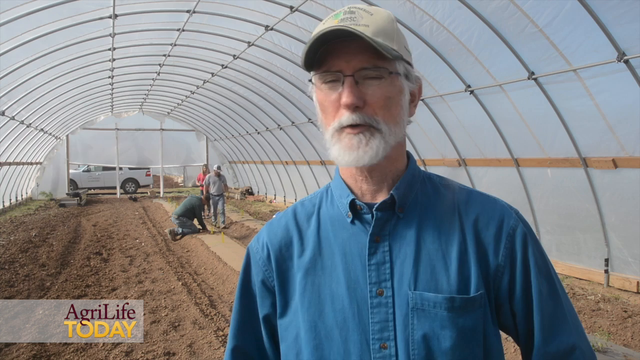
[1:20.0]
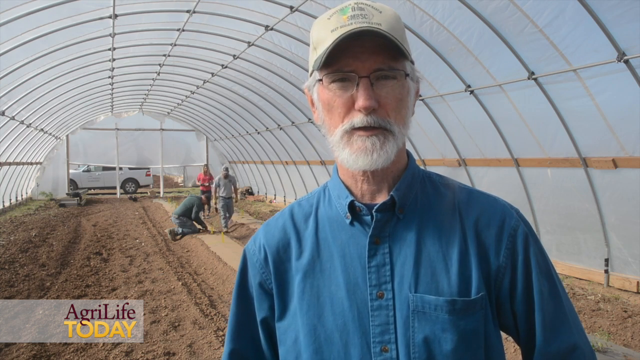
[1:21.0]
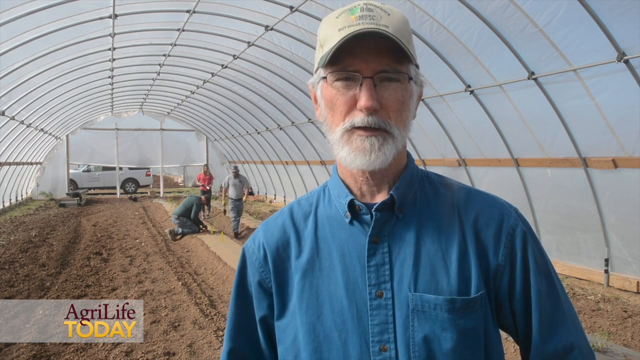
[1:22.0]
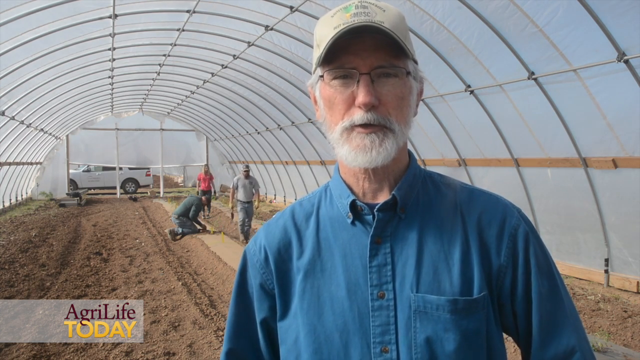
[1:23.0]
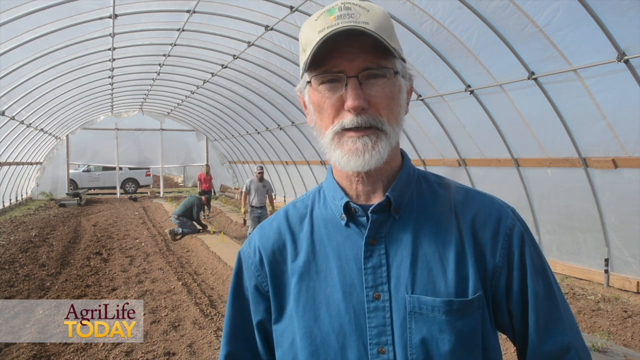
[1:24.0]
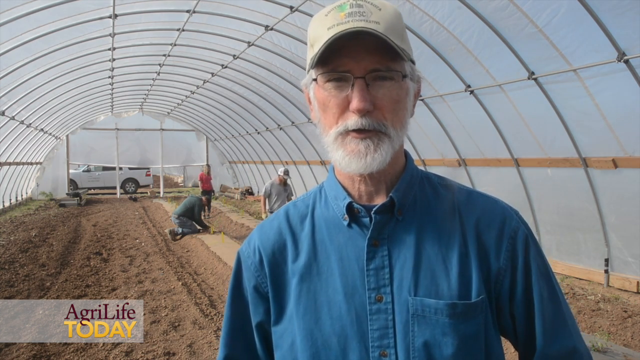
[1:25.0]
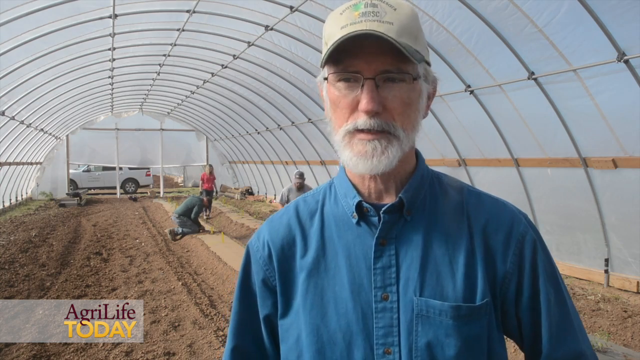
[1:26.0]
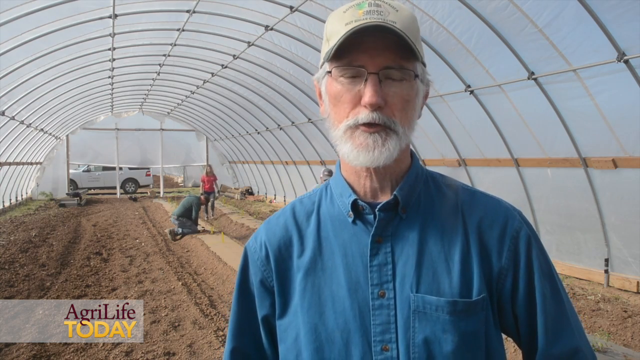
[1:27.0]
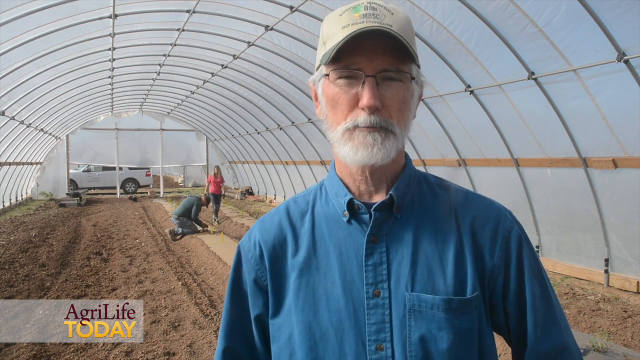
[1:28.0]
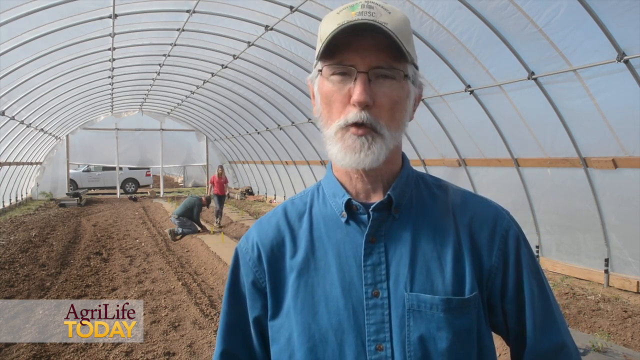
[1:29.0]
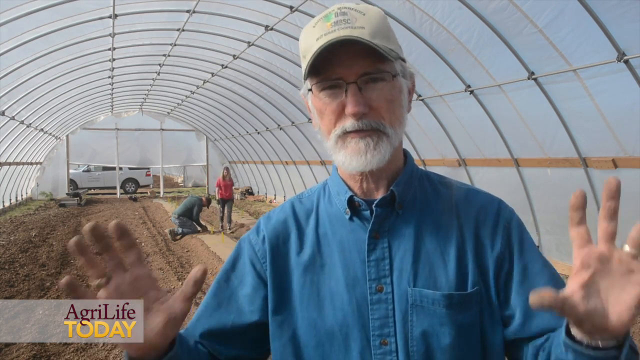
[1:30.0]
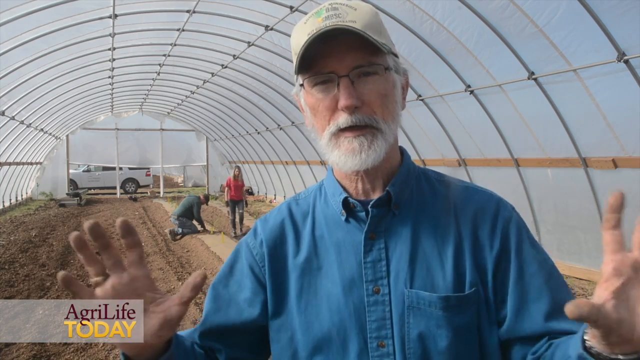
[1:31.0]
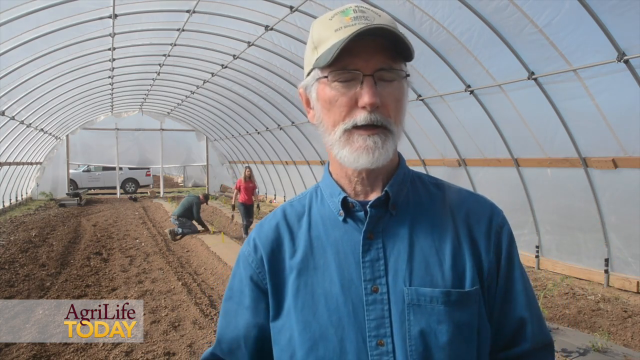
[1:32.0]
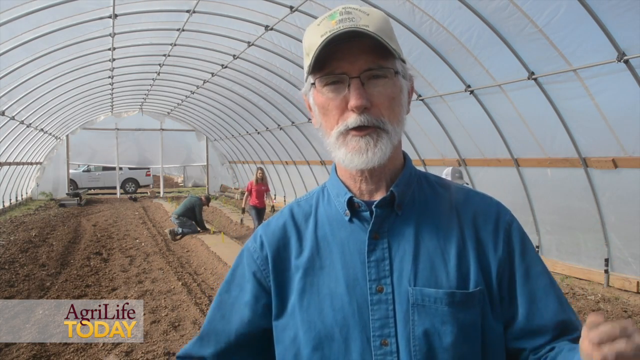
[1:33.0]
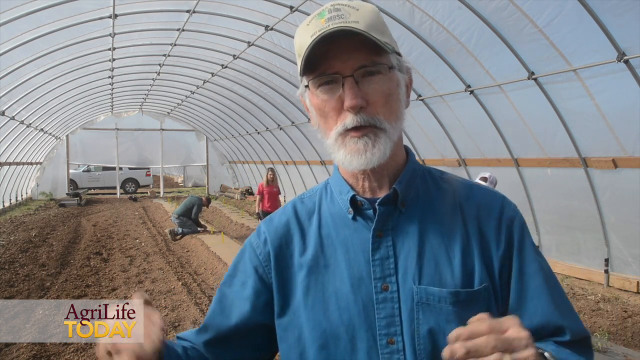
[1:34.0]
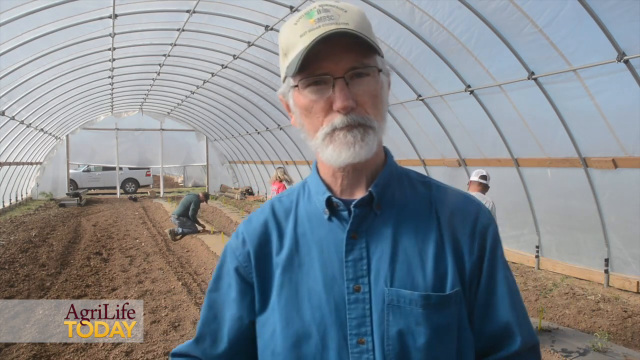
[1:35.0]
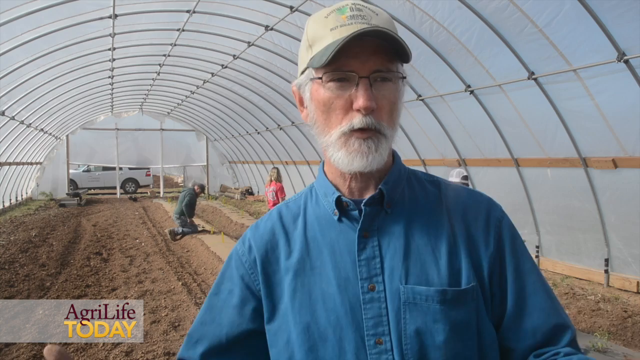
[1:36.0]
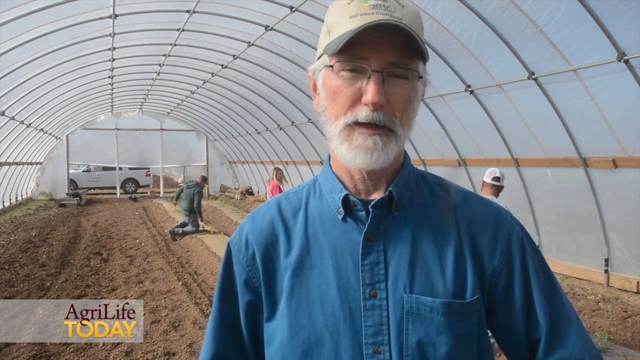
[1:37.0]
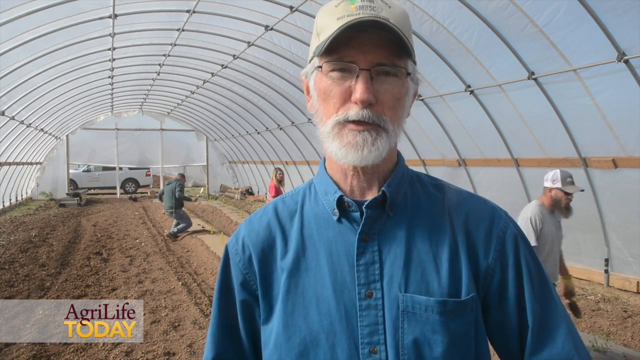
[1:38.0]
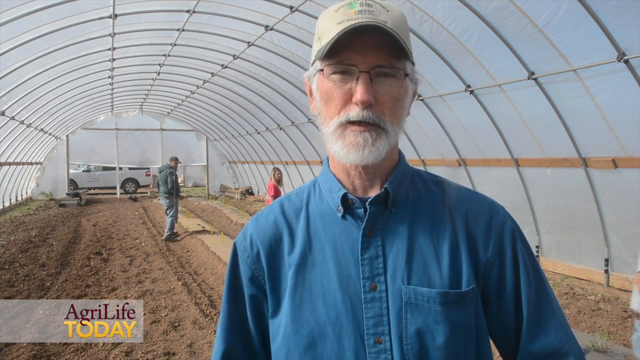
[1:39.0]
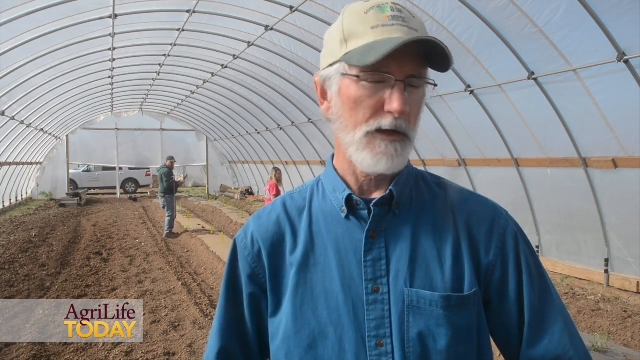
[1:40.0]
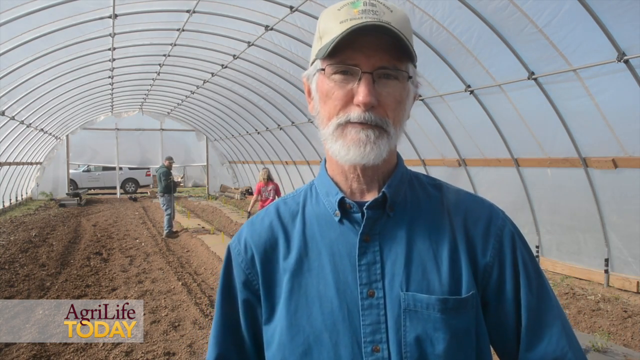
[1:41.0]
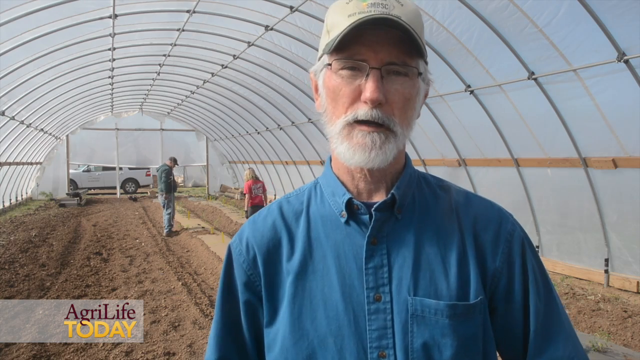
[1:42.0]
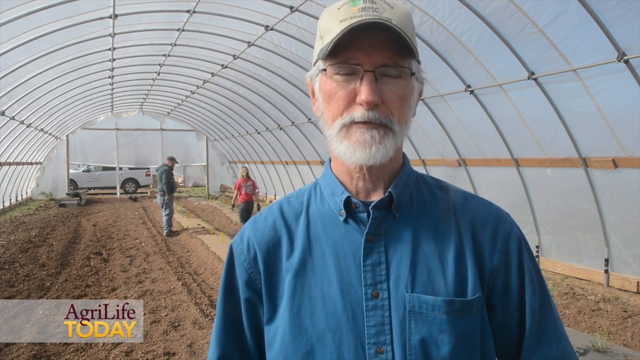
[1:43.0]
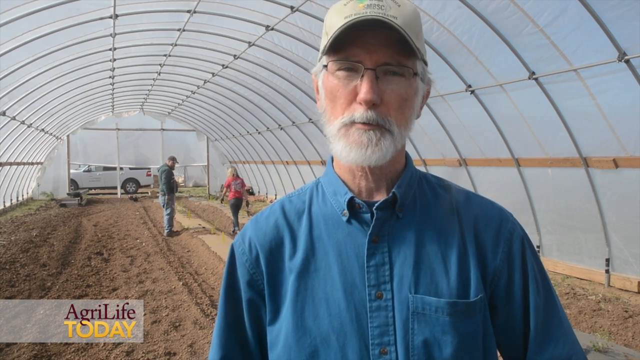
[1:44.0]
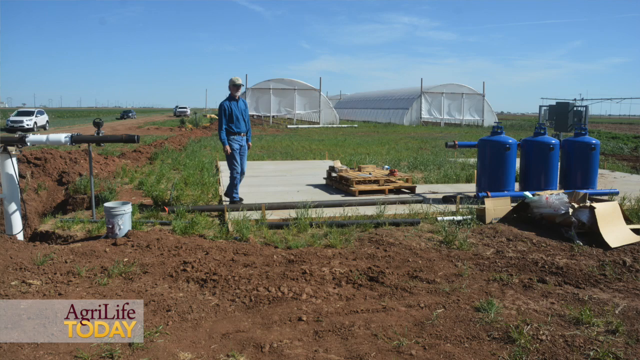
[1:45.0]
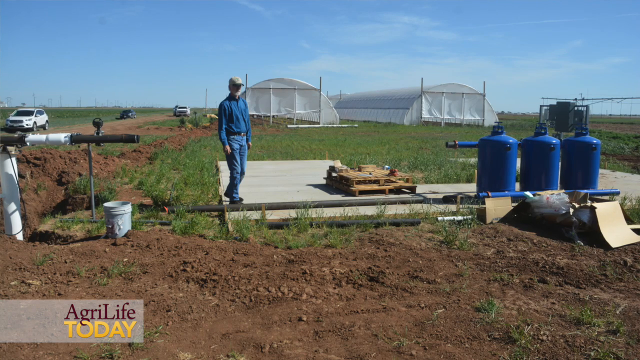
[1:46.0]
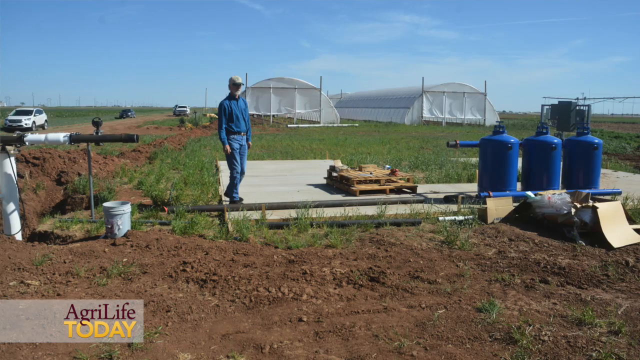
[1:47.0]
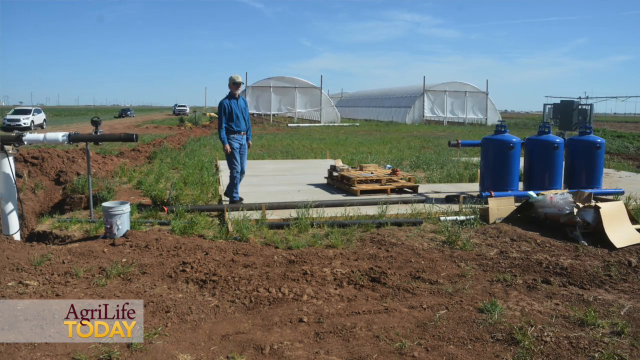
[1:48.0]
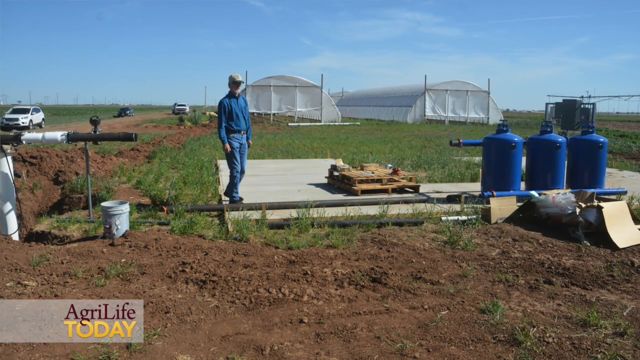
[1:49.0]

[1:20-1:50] An older man with white hair, a white beard, a baseball cap and glasses stands at the front of the image, wearing a blue shirt unbuttoned at the top. In the background, inside the greenhouse he is standing in, three men appear to be tending to the soil in some way; one is on his knees and the other two are standing up. A white four-wheel drive is also visible in the background, outside the greenhouse. The man at the front, closer to the cameraman, talks animatedly, his hands moving up and down. "AgriLife Today" comes up in the bottom left of the screen as he talks, so he is possibly from AgriLife Today. A picture then shows him standing outside the front of the greenhouses, and the video pans back to him talking. He appears to be explaining something about the greenhouses and the tomatoes he is going to grow.